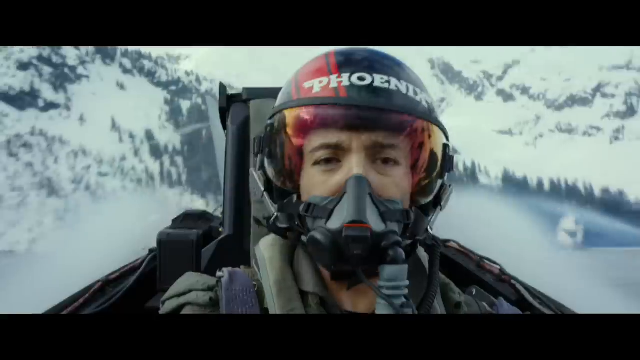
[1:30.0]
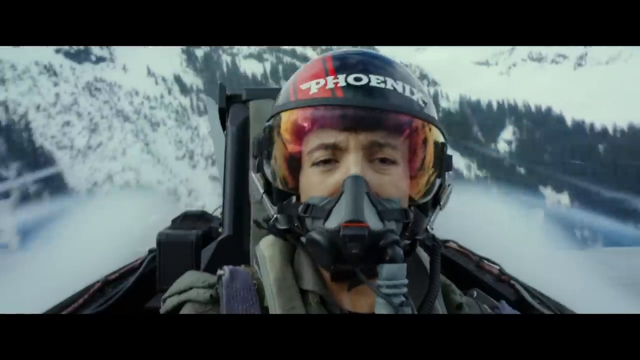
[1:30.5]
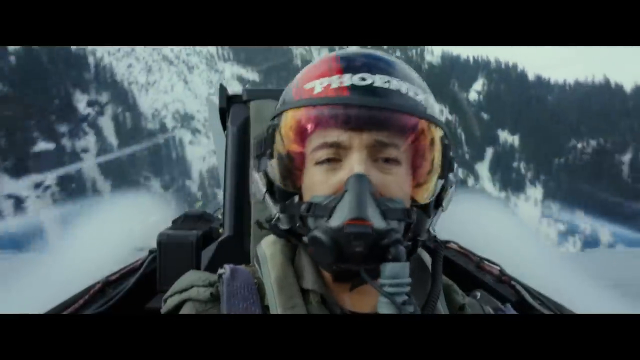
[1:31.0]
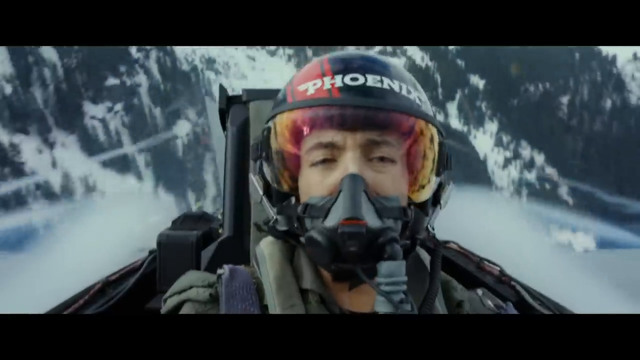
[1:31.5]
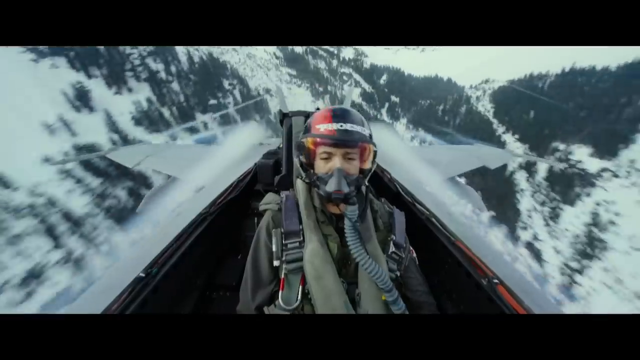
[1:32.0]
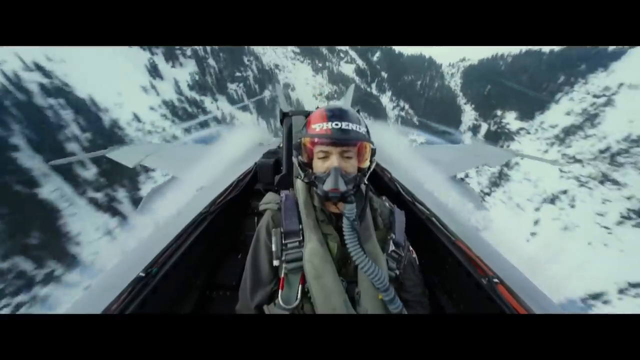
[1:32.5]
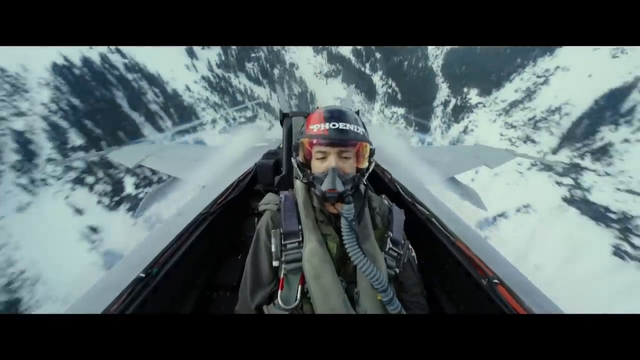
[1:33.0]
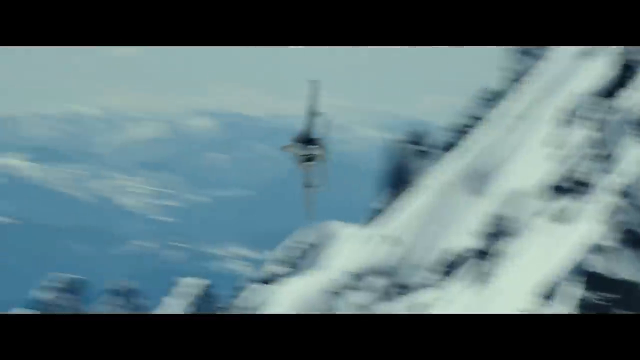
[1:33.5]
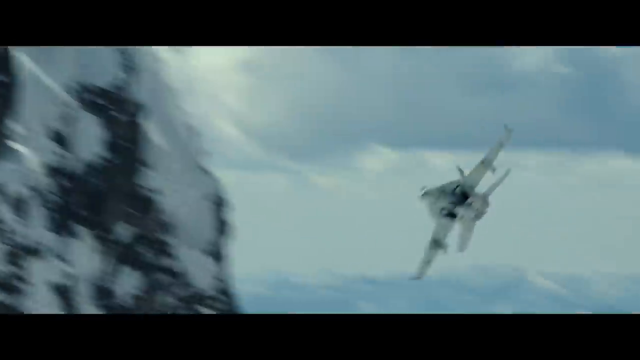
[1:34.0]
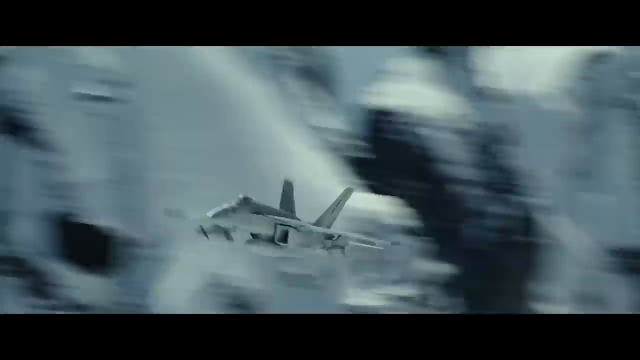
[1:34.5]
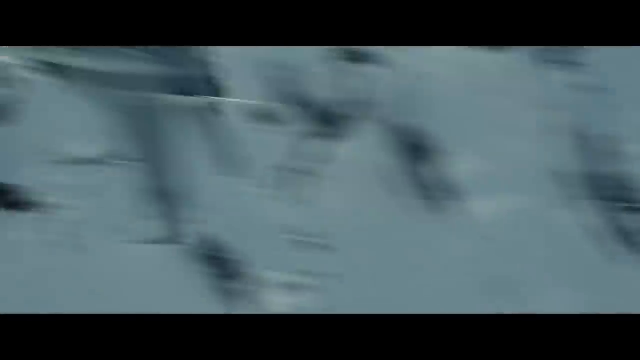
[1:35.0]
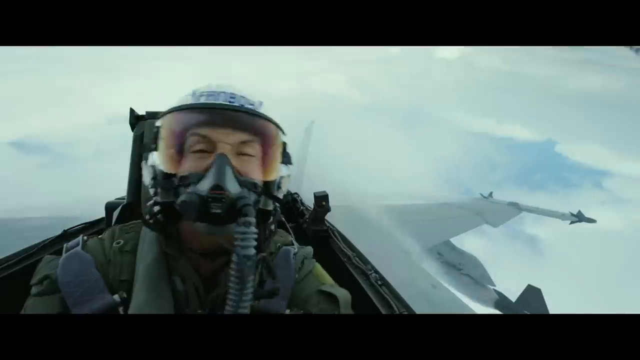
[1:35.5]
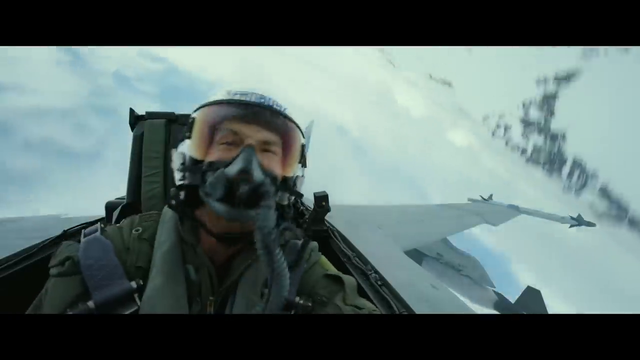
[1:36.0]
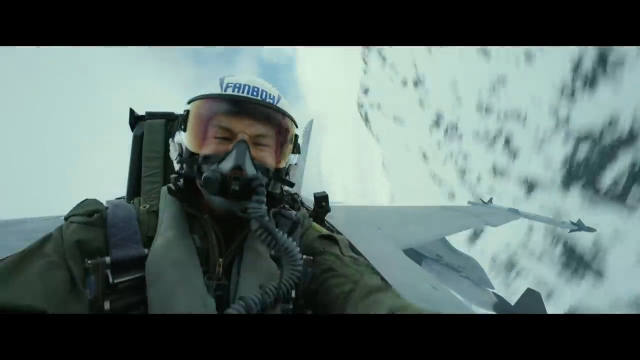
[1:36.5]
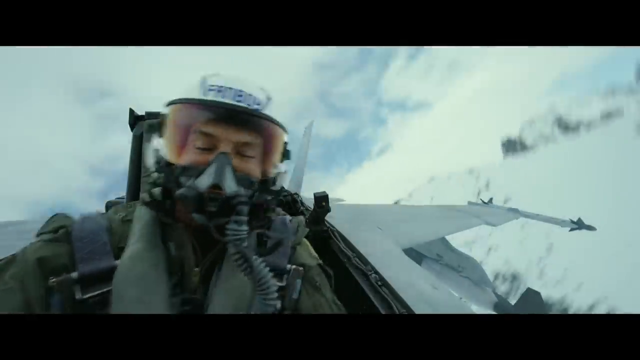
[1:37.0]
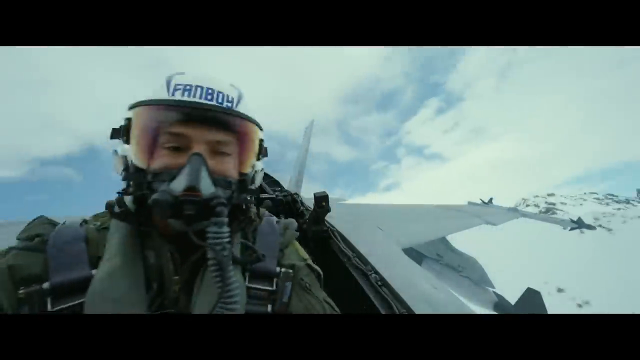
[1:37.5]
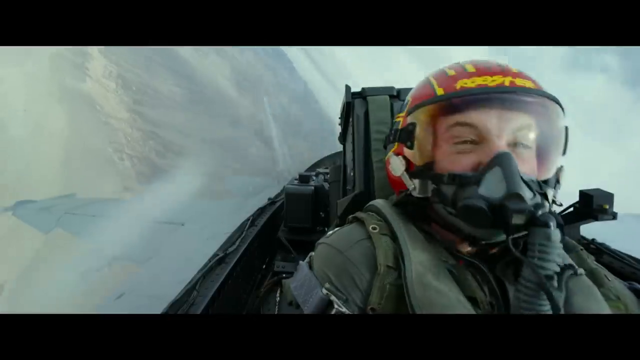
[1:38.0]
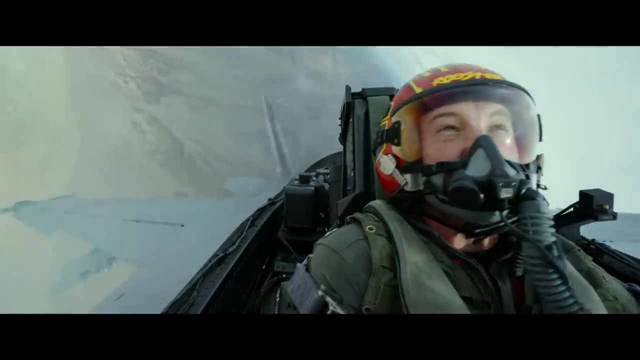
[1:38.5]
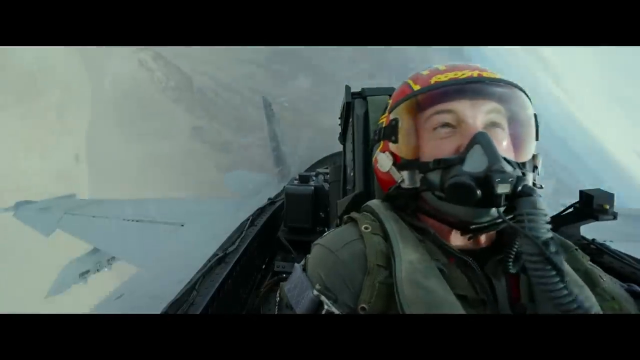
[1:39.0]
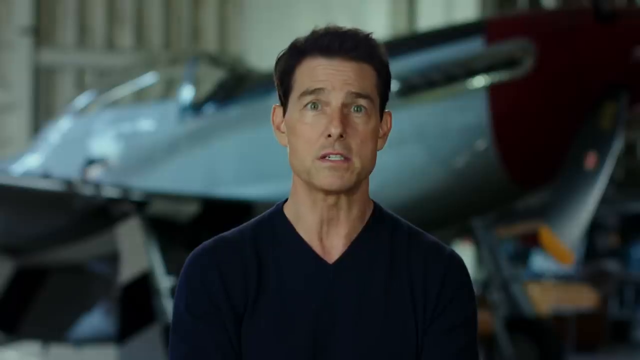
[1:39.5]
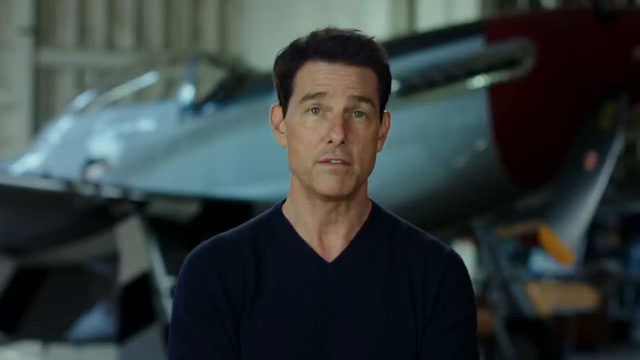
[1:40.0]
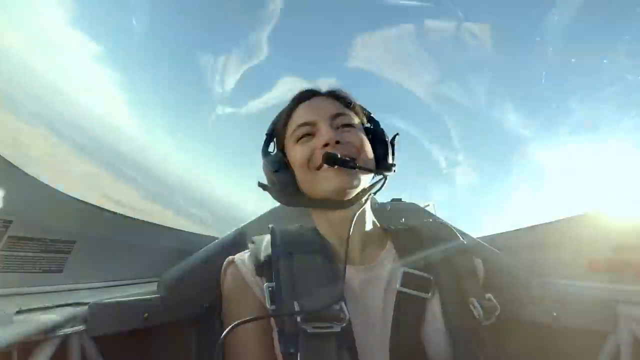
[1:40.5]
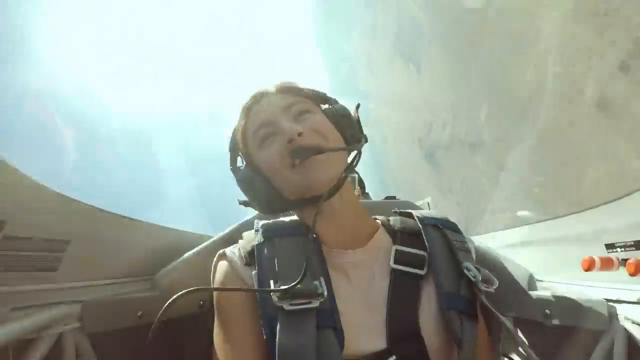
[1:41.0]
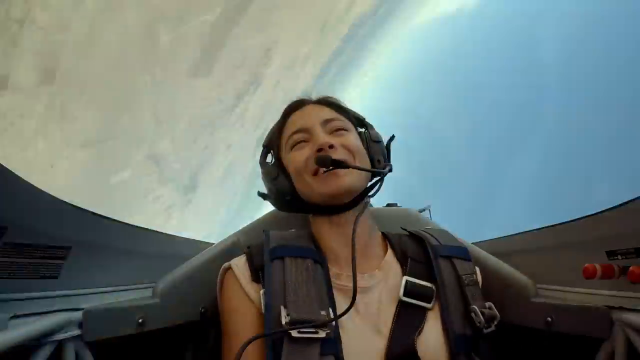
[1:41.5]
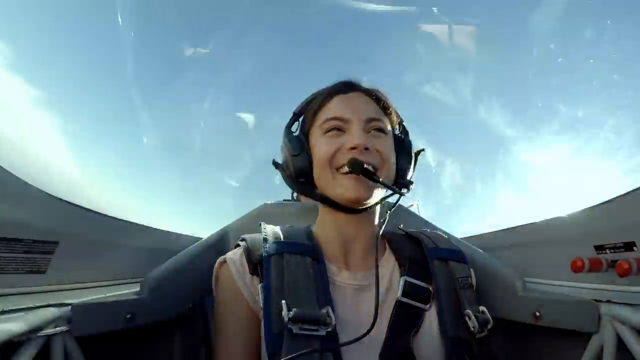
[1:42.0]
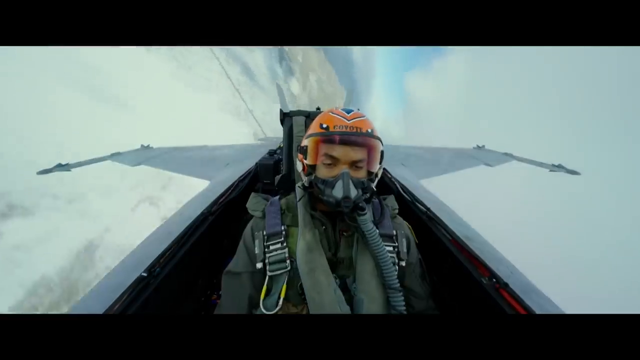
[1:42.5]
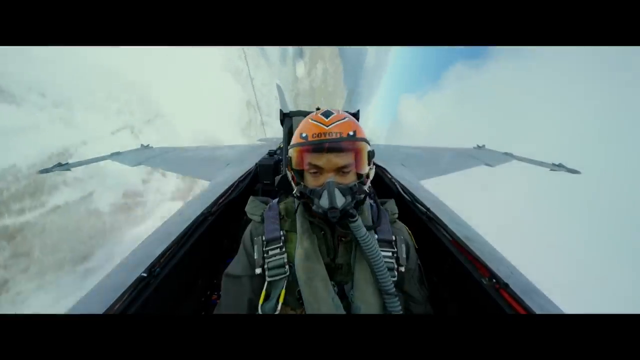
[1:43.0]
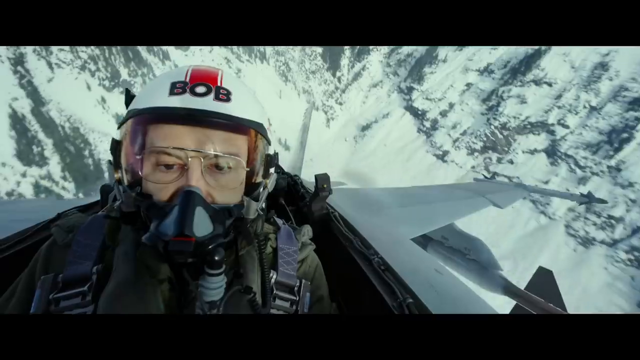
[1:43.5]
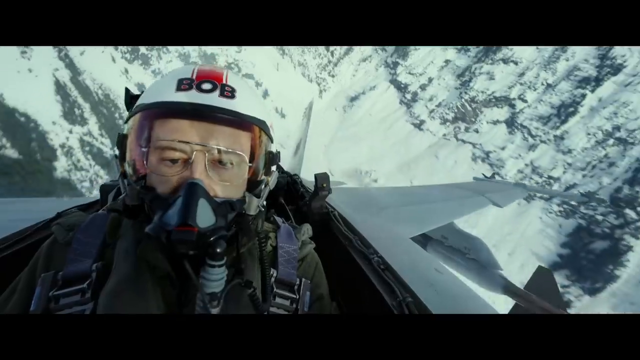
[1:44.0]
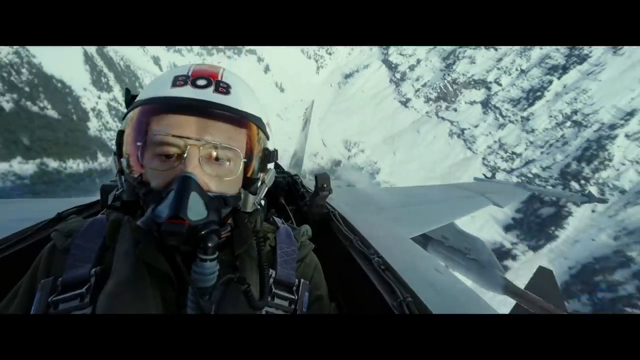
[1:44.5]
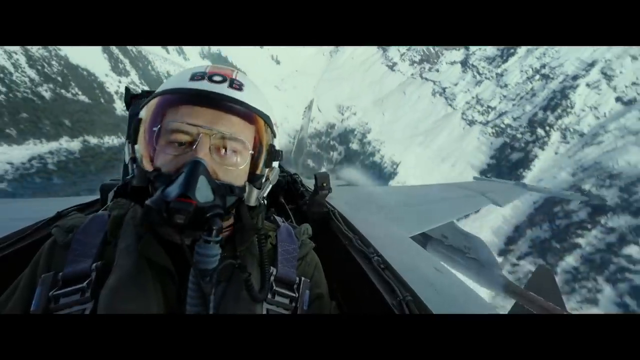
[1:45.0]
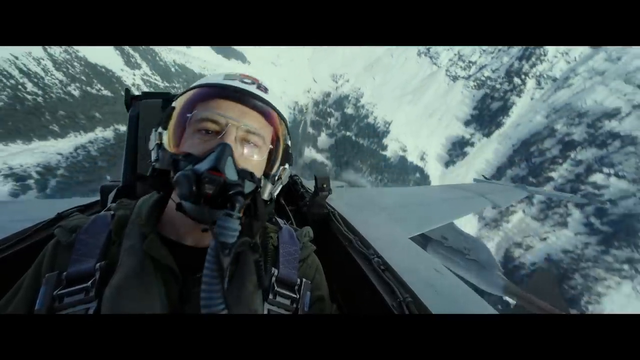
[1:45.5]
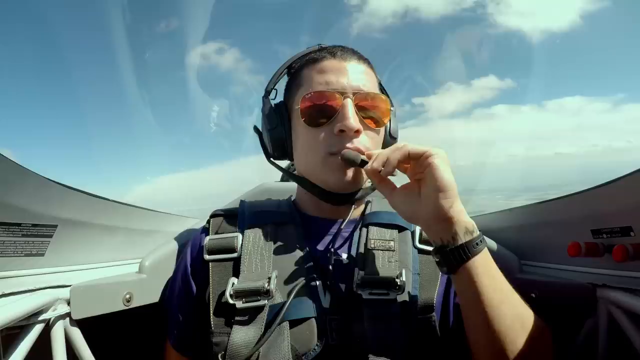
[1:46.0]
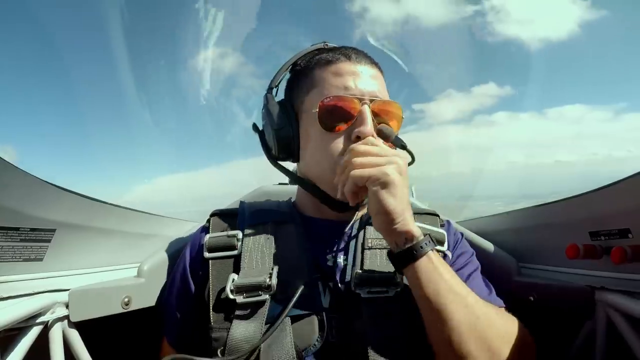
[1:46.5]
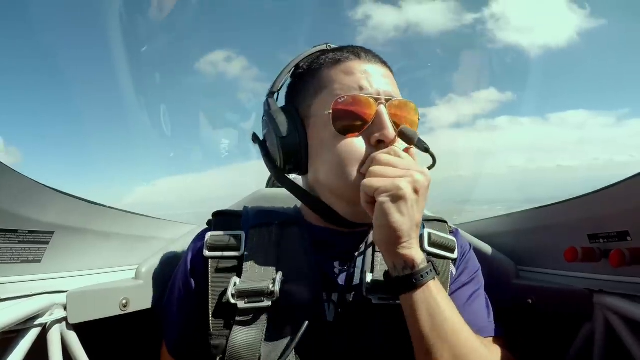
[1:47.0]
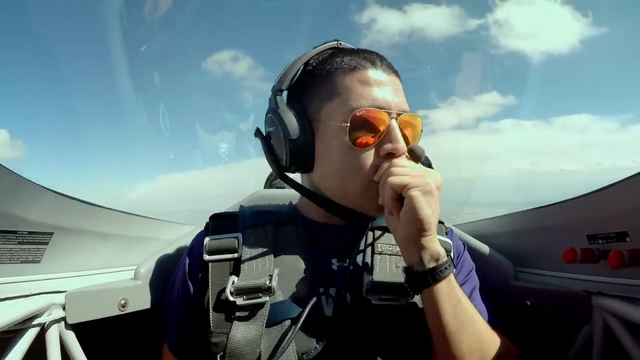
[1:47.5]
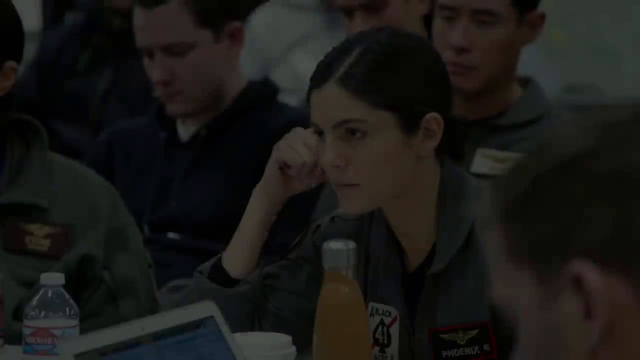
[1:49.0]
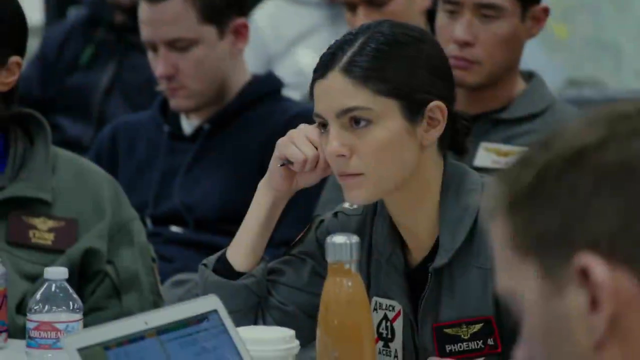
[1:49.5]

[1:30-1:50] Many people watch the man in the air as competitors race each other; they record videos and take pictures of him. He looks happy, and everyone looks happy. The scene then moves to a setting where some people look angry or sad, and some of the people up in the air look like they are suffocating. The people appear to be in their mid-thirties, with some looking old. Jerry and Joseph appear, apparently explaining what is going on. Visible text includes "Maverick", "June 2020", "payback", "phonics" and "jet". There are mixed emotions: some people seem to enjoy themselves, others look sad, and some seem uninterested, while others take videos and enjoy watching the people up in the air. Some people walk through snow, and some in a boat look up at them.